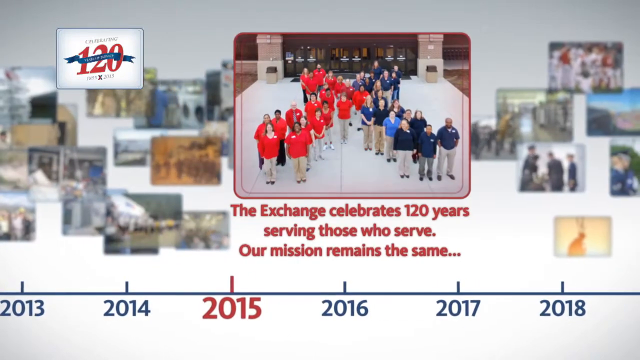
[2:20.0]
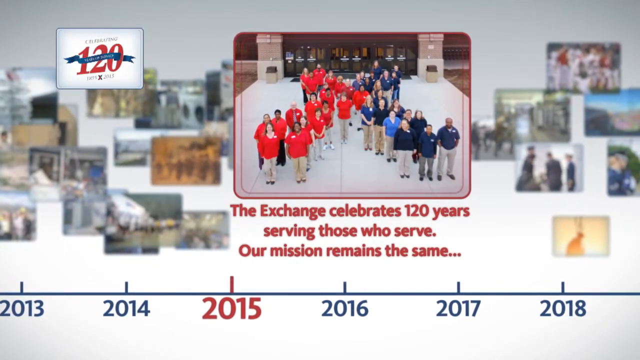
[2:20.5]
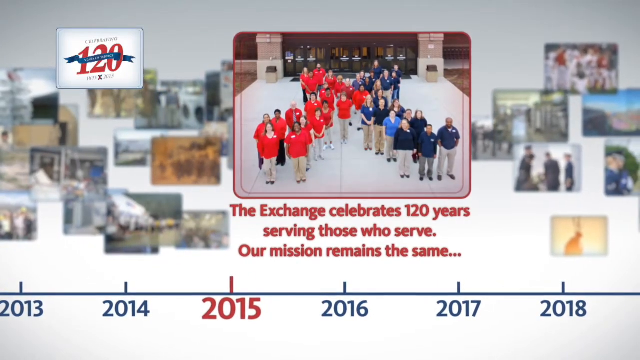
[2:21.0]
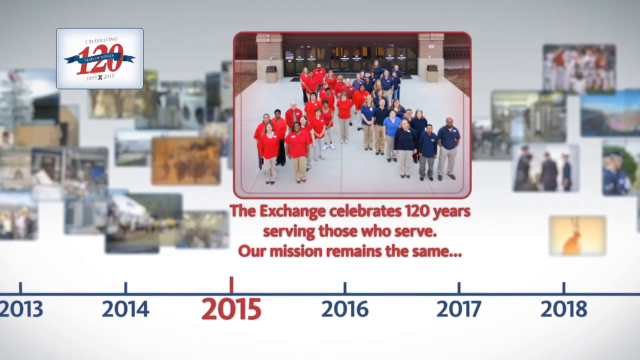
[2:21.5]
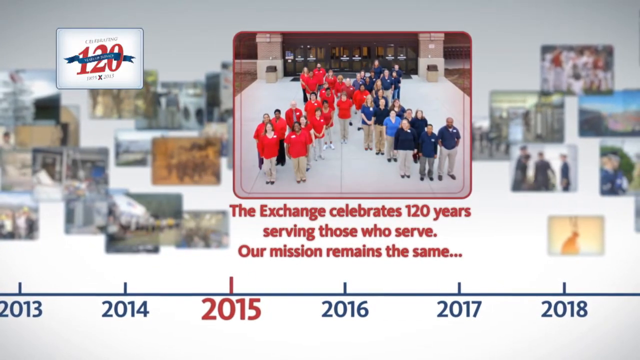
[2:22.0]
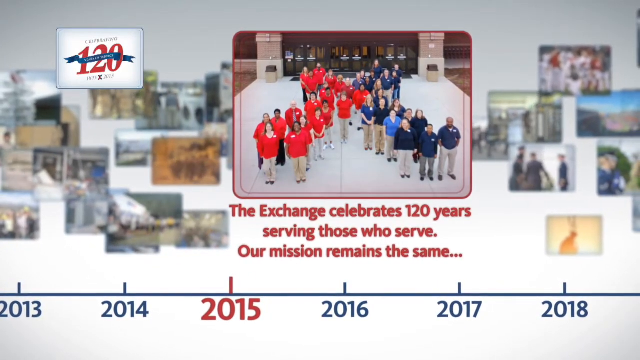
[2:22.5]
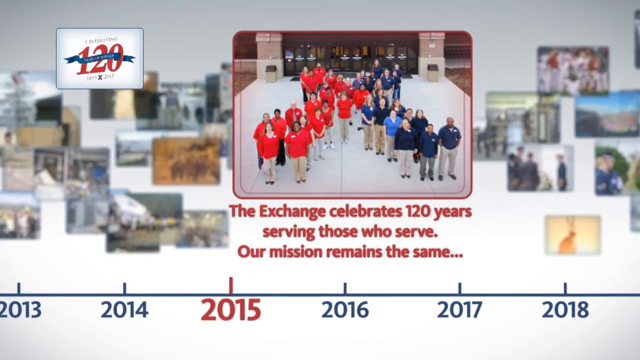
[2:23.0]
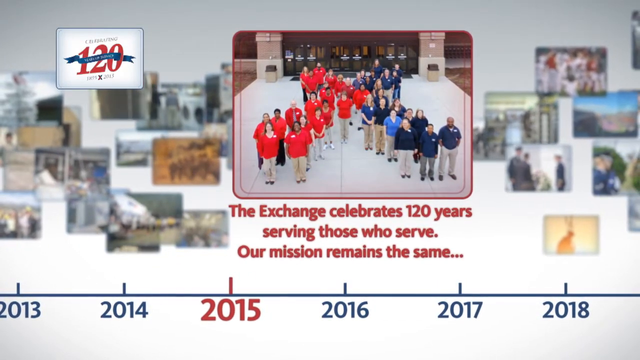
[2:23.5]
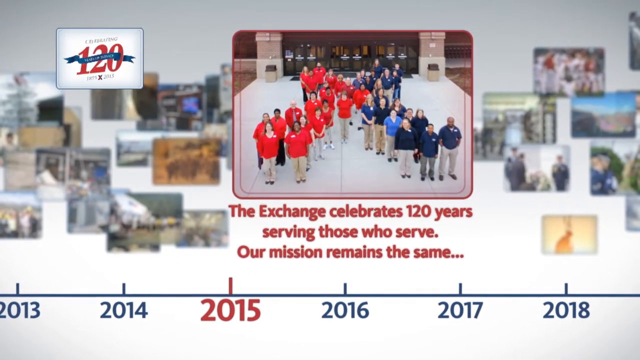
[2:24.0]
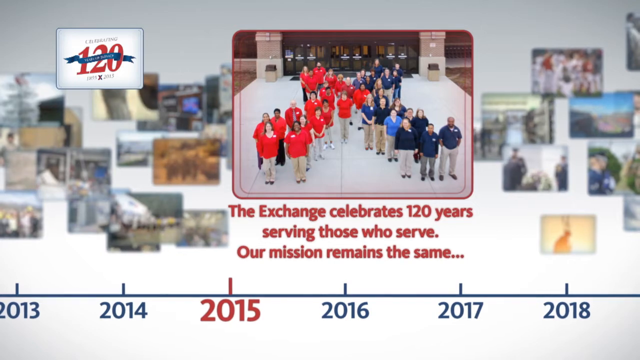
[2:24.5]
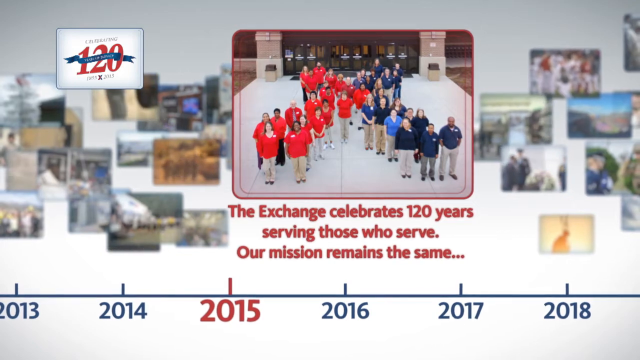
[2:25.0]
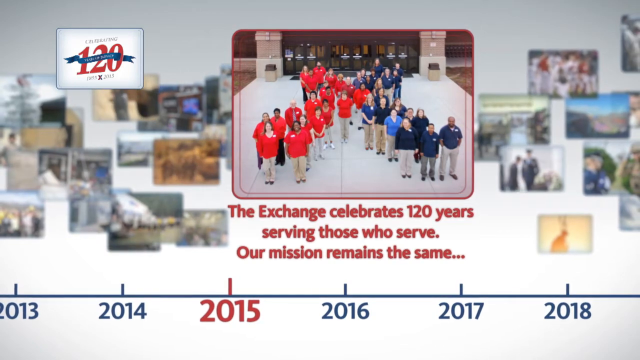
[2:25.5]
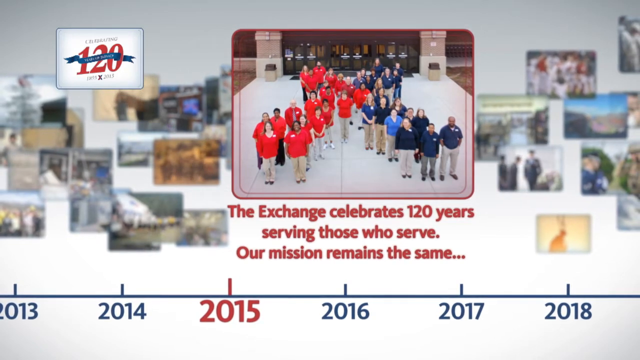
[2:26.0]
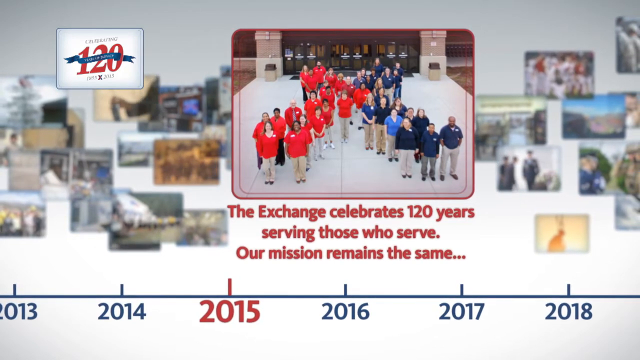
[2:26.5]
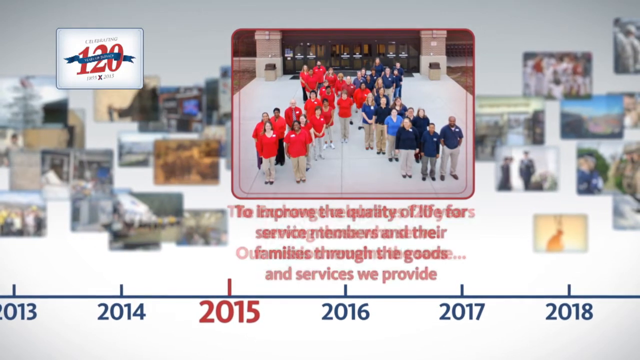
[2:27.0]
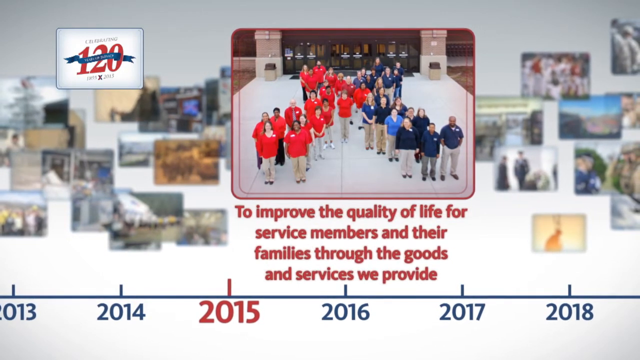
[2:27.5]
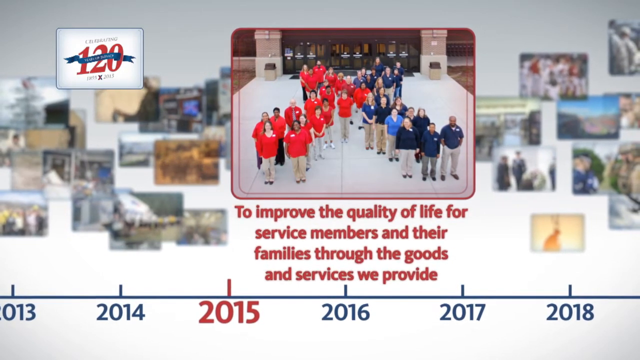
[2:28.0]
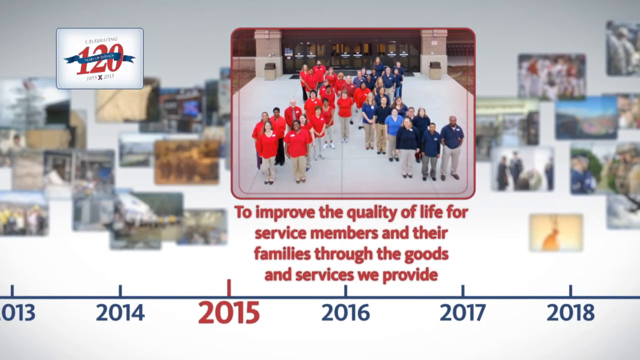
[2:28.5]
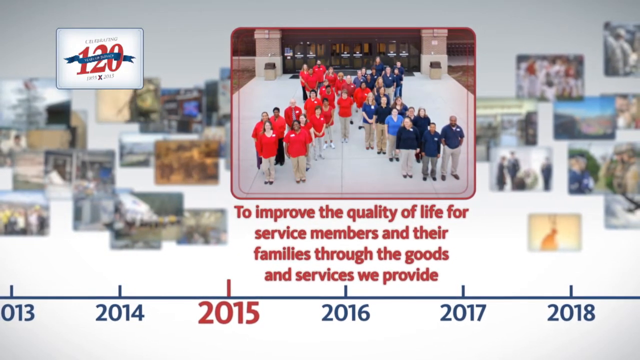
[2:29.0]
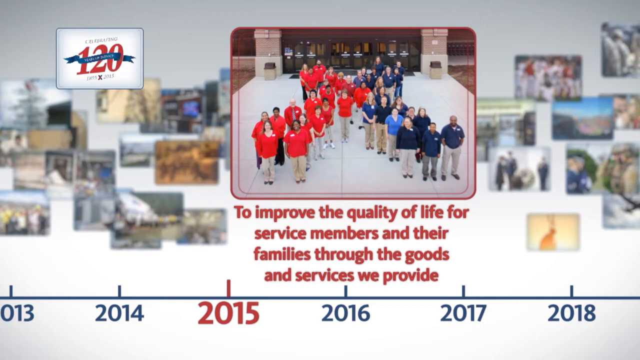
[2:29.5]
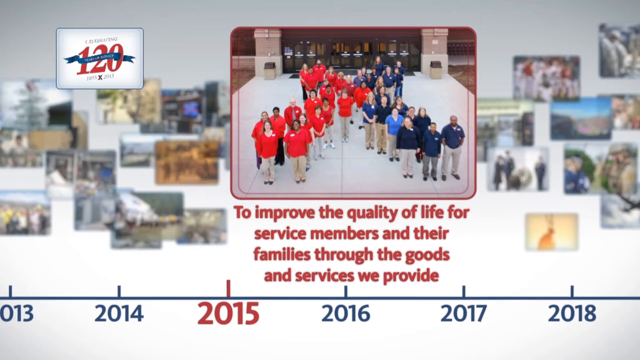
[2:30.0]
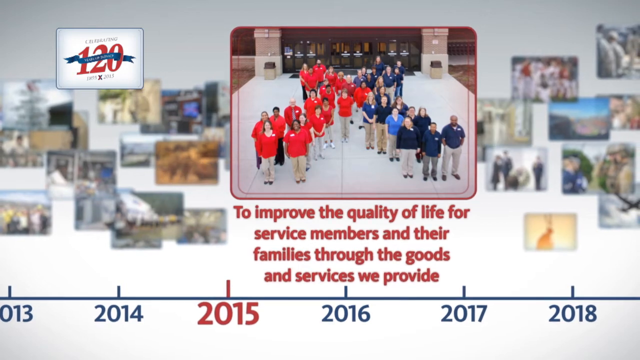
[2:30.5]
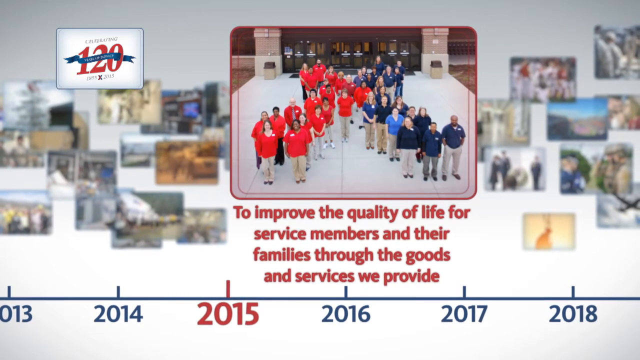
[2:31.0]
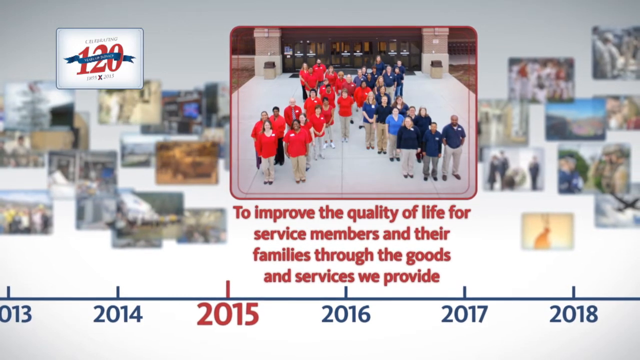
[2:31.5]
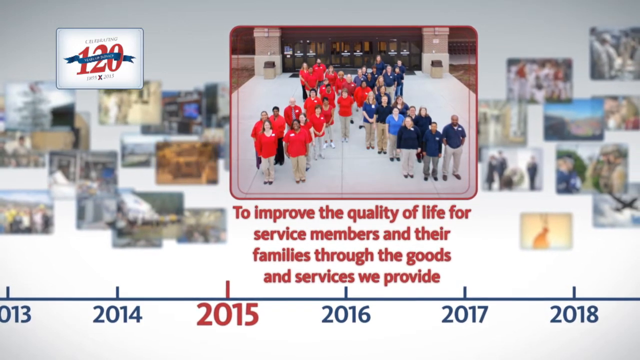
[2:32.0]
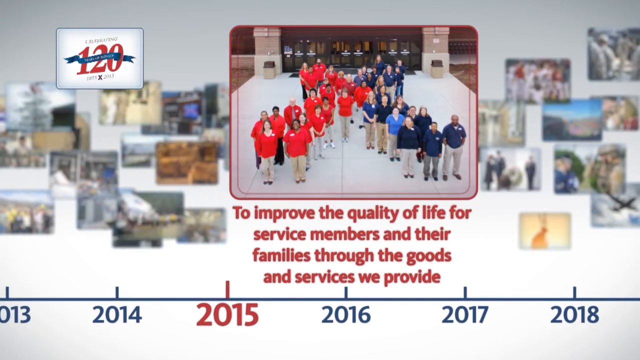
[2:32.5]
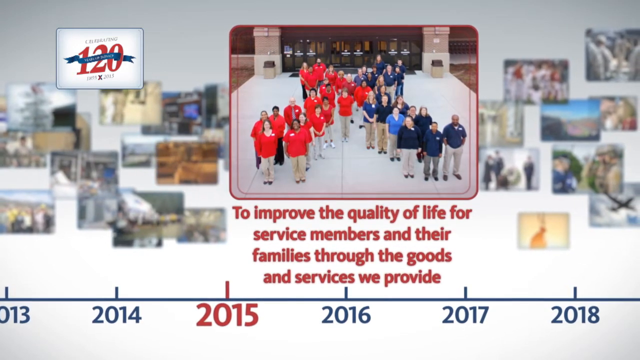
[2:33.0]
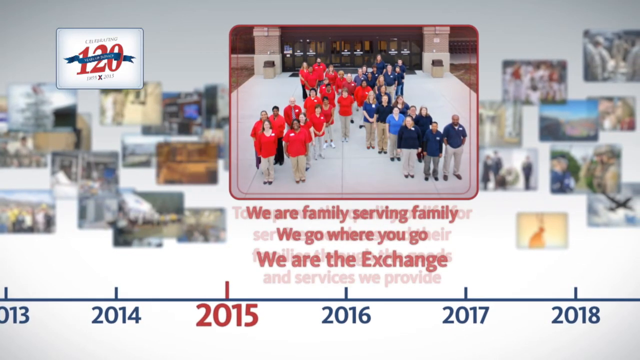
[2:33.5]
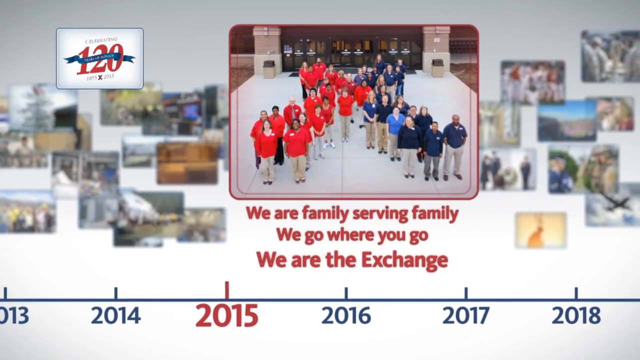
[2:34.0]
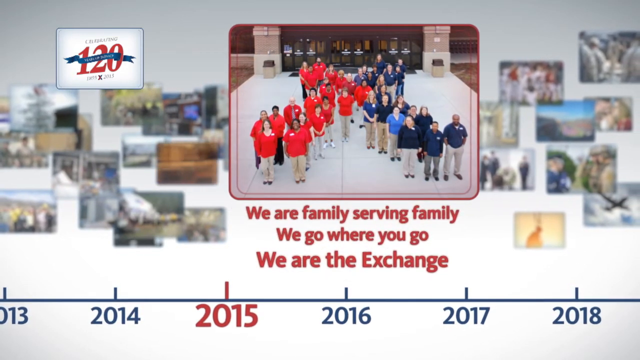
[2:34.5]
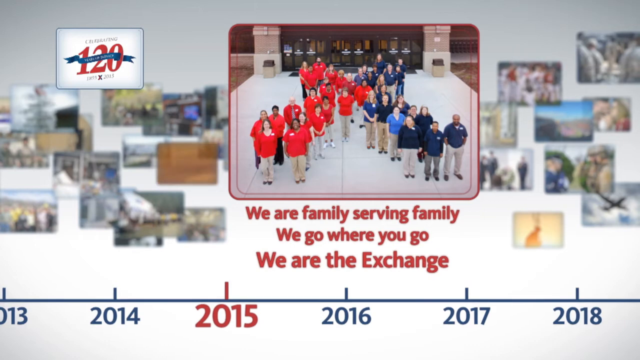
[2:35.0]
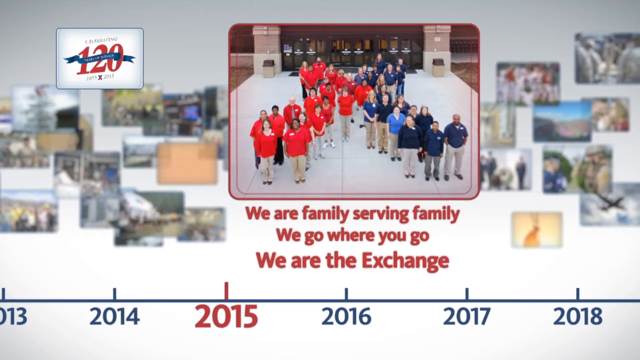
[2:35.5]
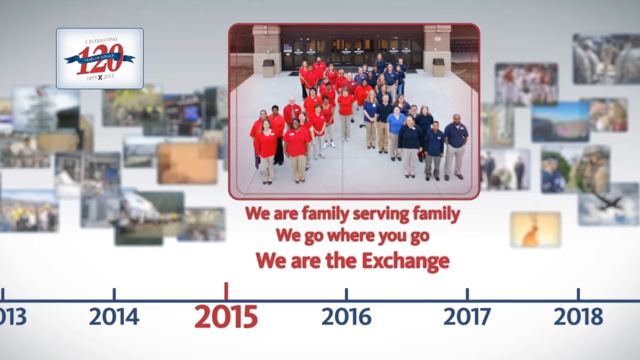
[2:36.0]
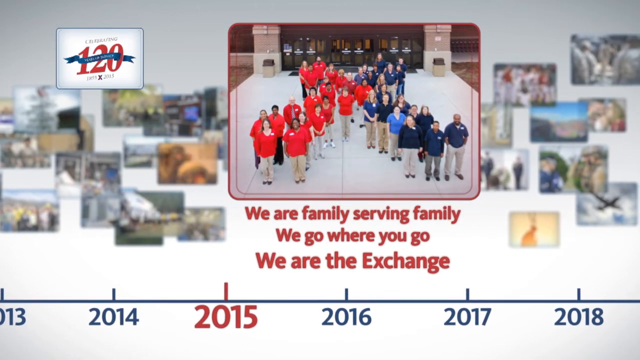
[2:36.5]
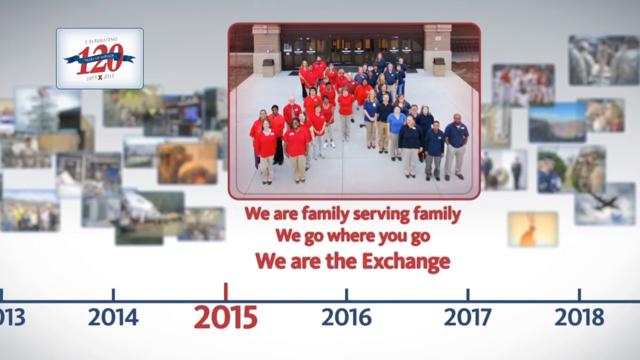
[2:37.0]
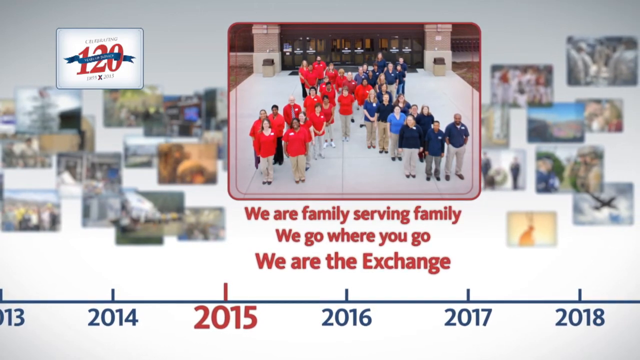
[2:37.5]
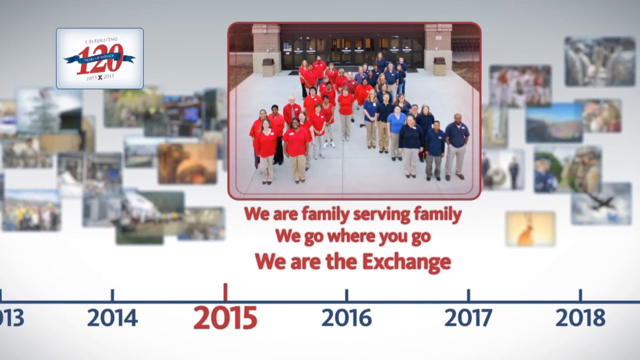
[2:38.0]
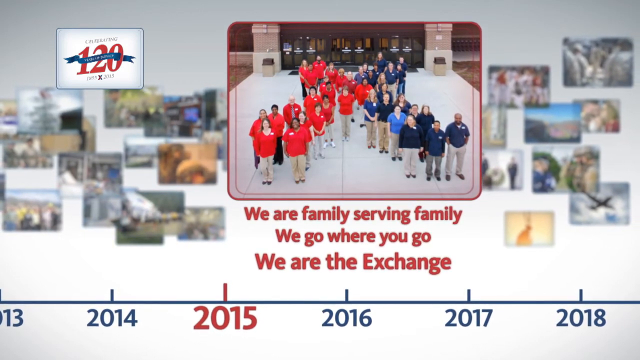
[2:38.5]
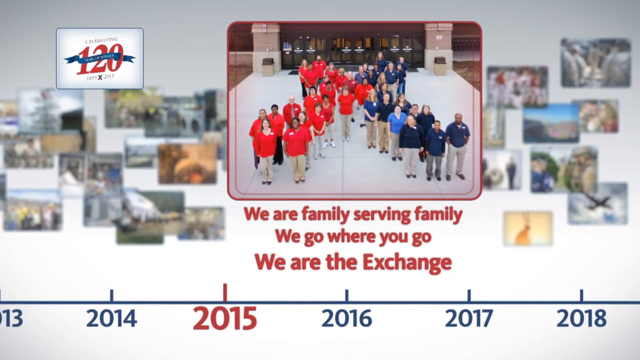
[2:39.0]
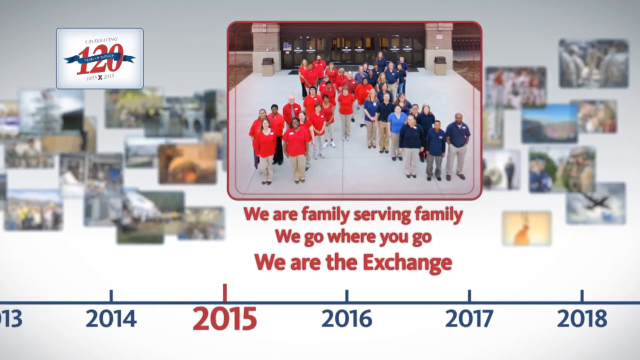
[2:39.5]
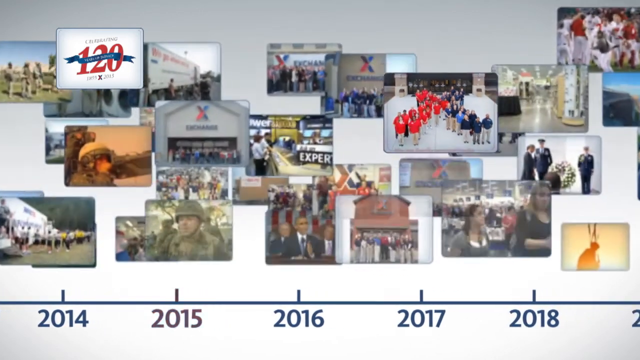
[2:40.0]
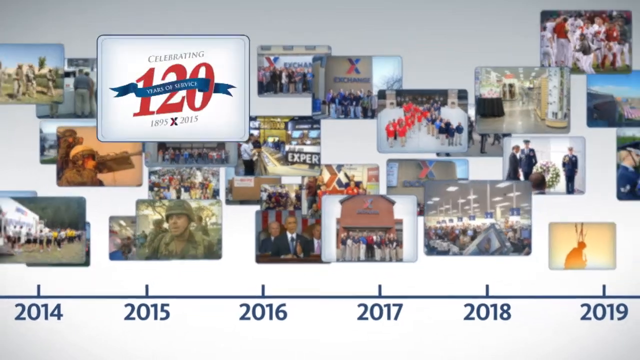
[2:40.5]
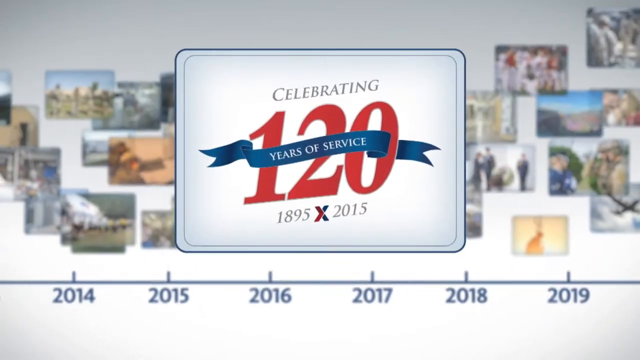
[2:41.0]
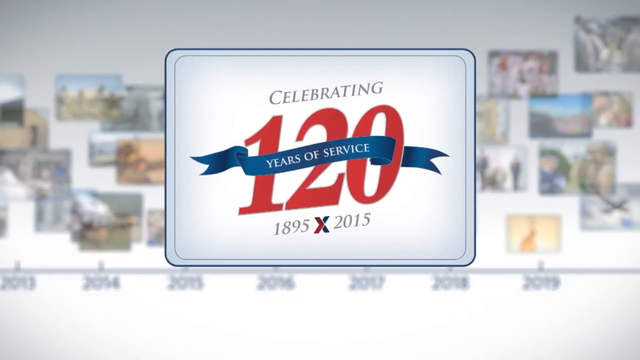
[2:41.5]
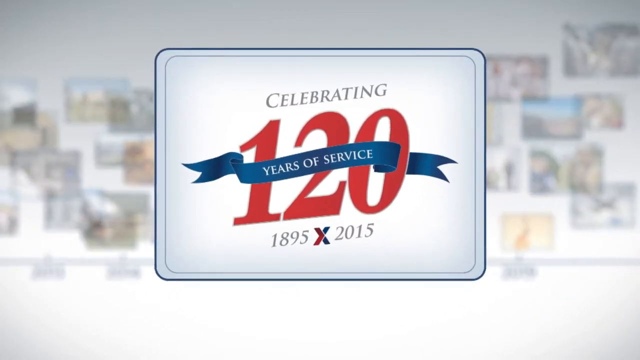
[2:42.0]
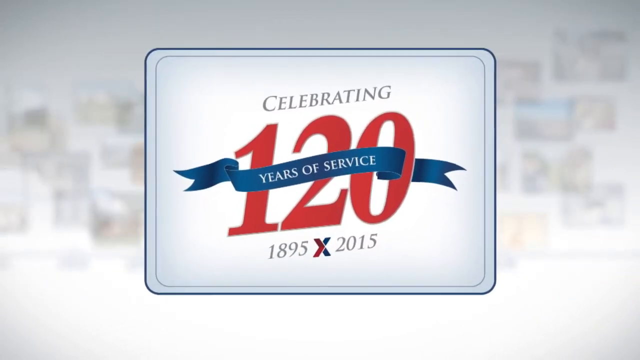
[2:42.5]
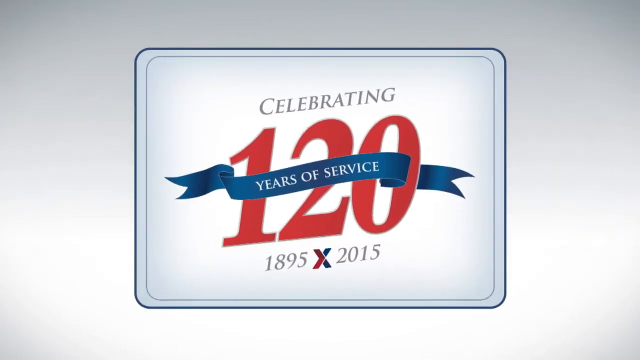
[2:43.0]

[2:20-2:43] For 2015, the exchange celebrates 120 years serving those who serve, and the mission stays the same. The photograph, bordered in red with some red fading into it, shows approximately 40 to 50 people: half wear red shirts and half wear blue, and they are split into two groups forming a letter X, with the people in red making up the left side of the X and the people in blue the right side. Text below the photograph reads "to improve the quality of life for service members and their families through the goods and services we provide," then transitions to "We are family serving family. We go where you go. We are the exchange." The photograph fades into the background, and the original 120 years of service placard is brought to the foreground and covers the entire screen, ending the video.